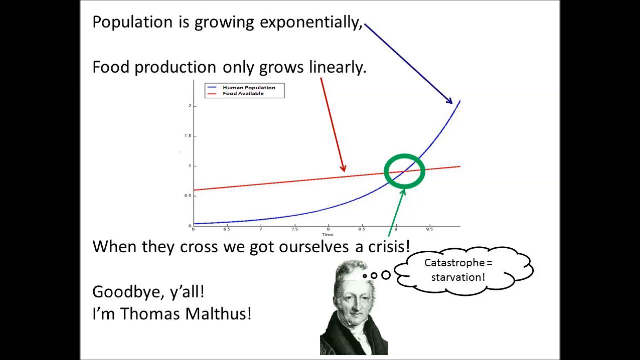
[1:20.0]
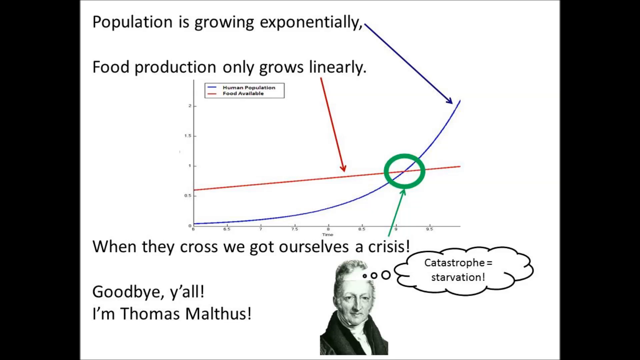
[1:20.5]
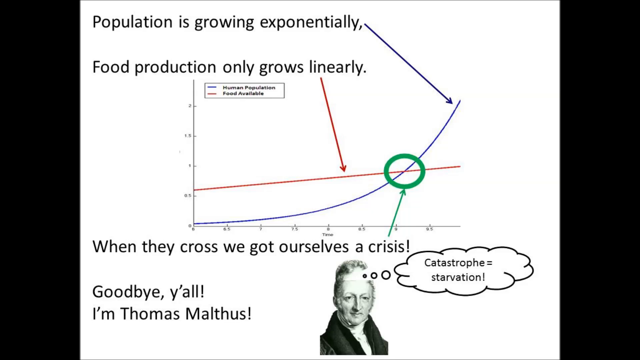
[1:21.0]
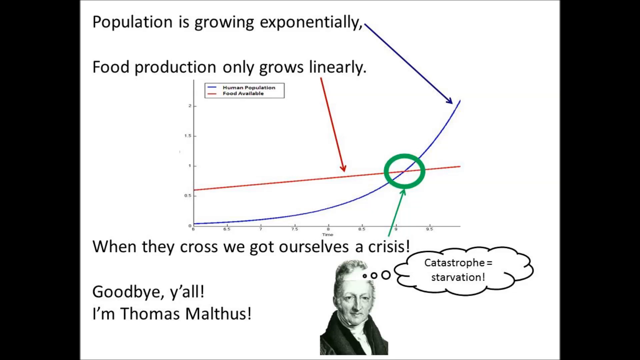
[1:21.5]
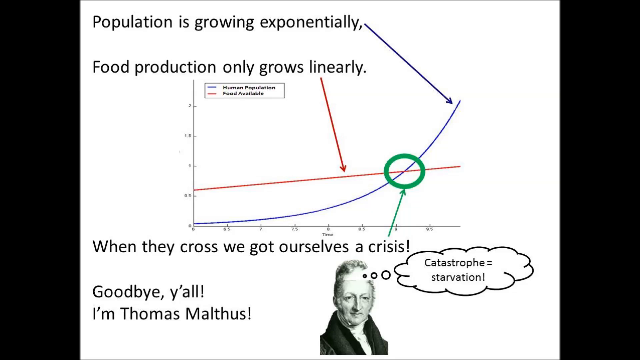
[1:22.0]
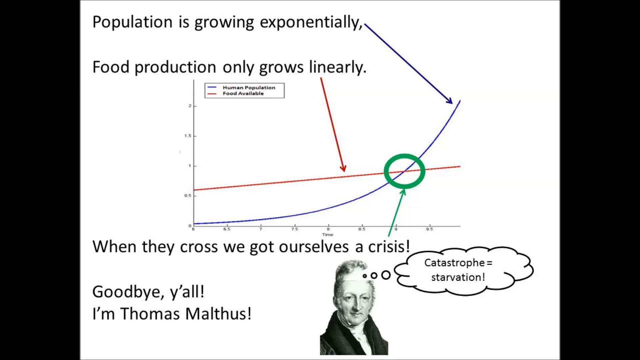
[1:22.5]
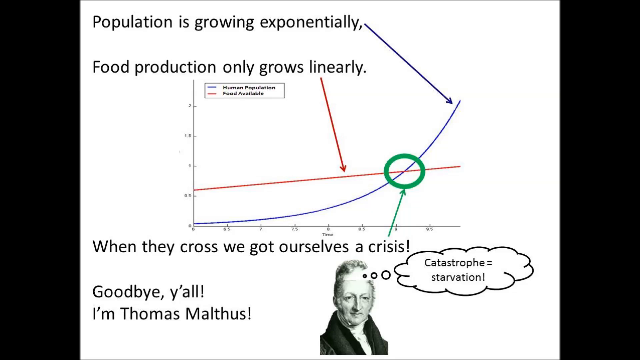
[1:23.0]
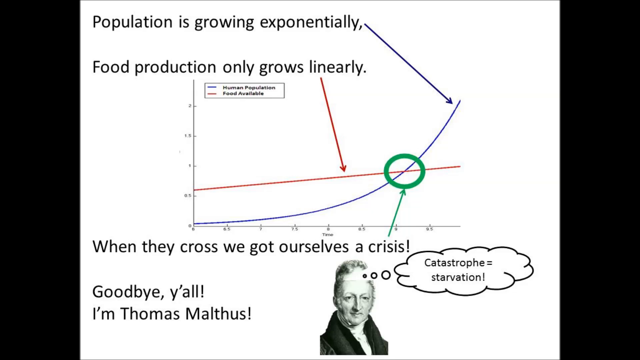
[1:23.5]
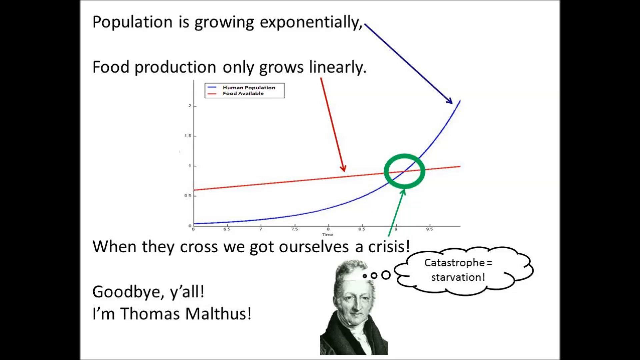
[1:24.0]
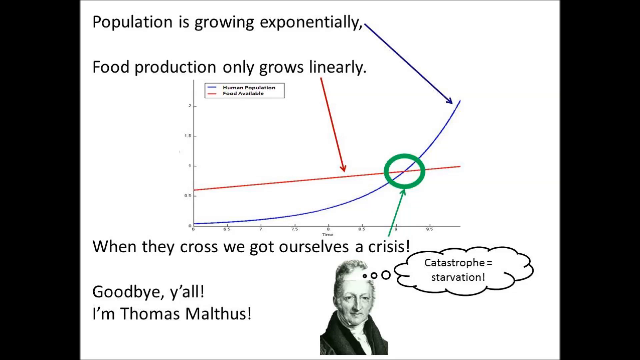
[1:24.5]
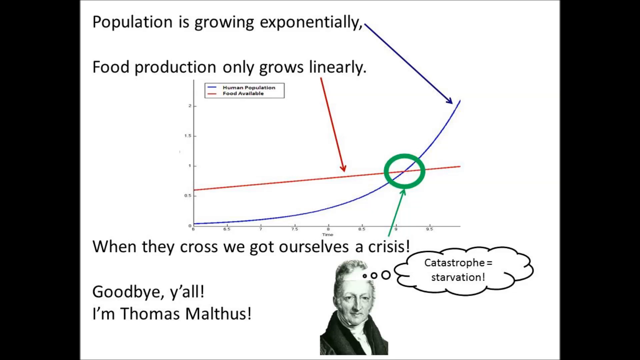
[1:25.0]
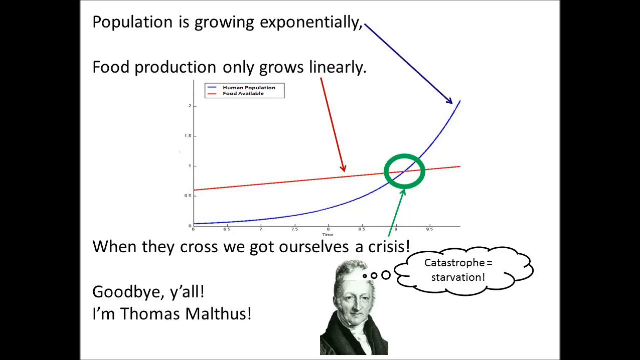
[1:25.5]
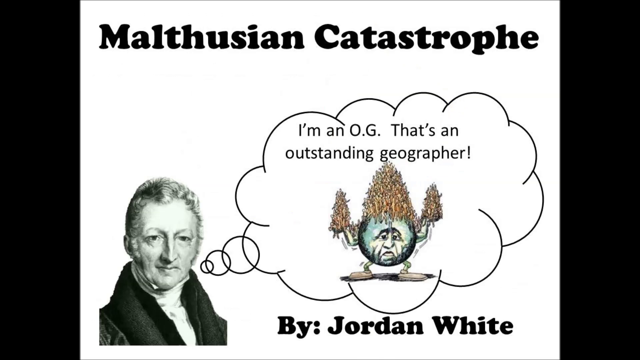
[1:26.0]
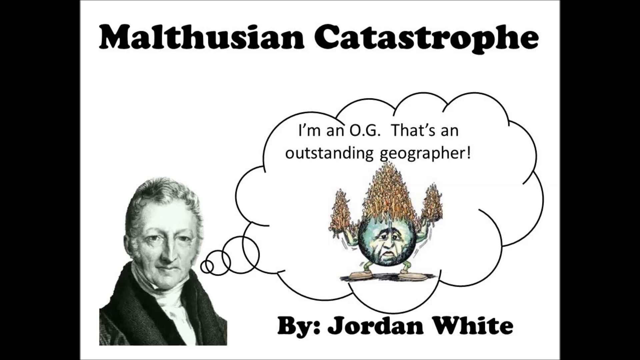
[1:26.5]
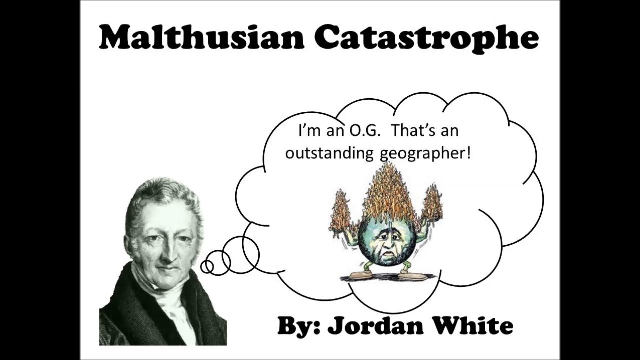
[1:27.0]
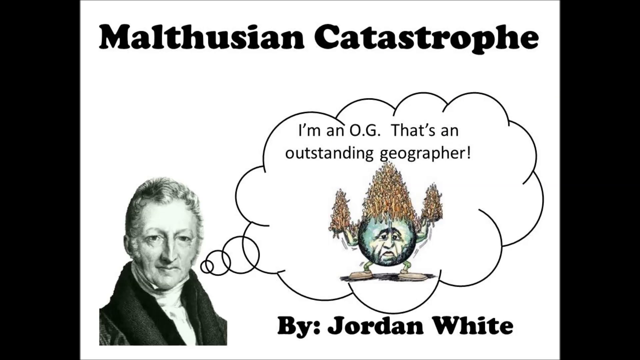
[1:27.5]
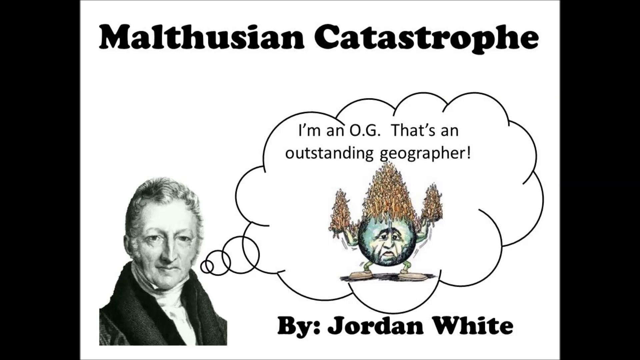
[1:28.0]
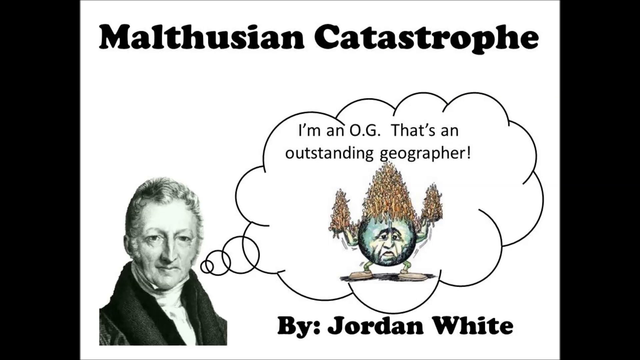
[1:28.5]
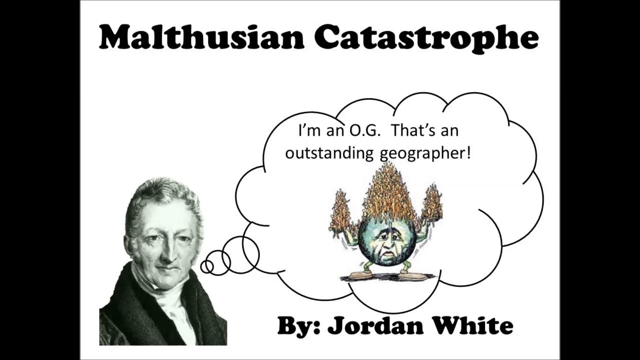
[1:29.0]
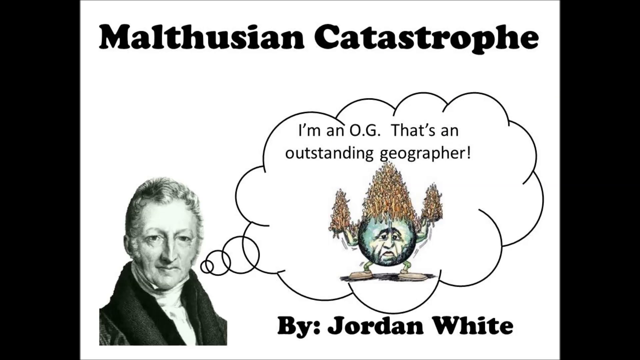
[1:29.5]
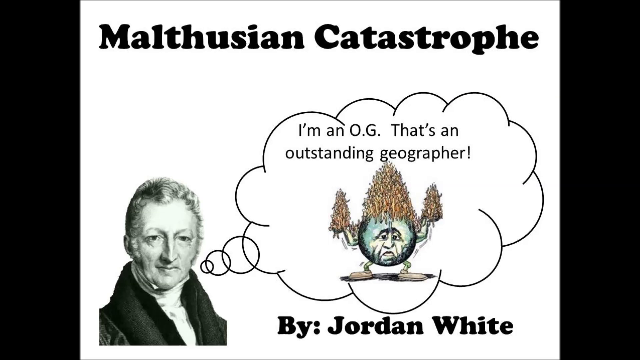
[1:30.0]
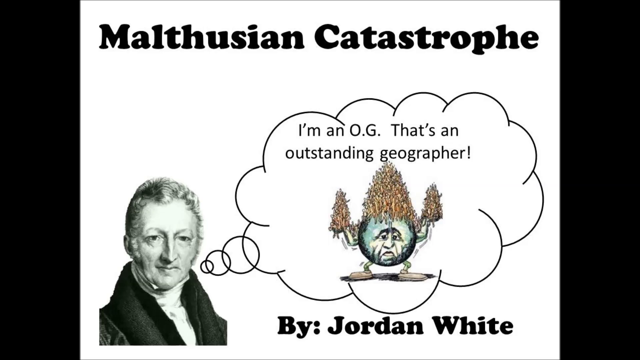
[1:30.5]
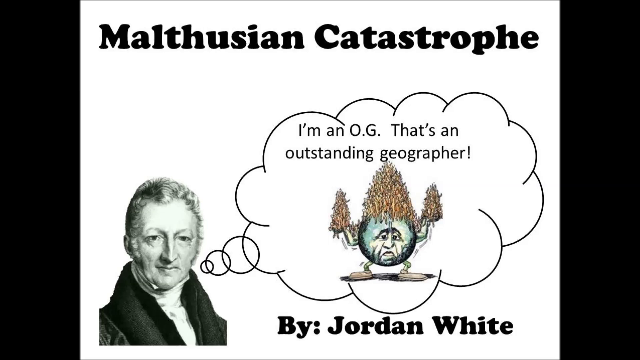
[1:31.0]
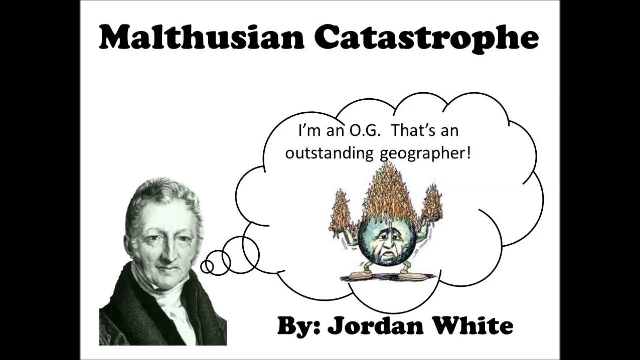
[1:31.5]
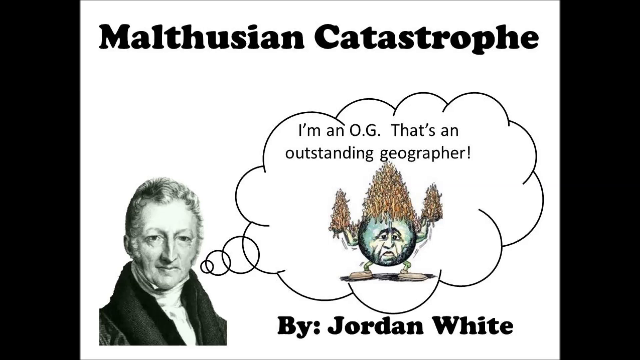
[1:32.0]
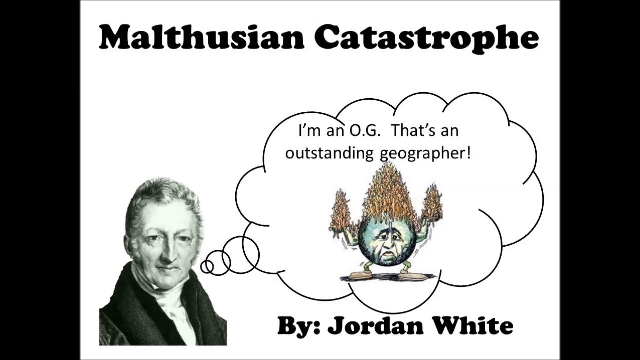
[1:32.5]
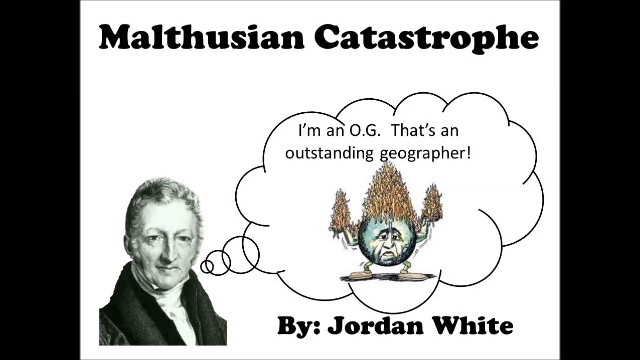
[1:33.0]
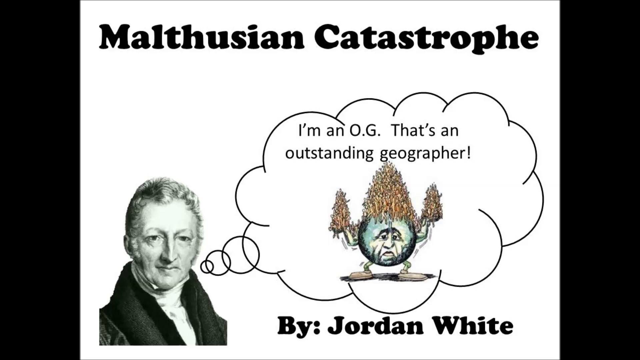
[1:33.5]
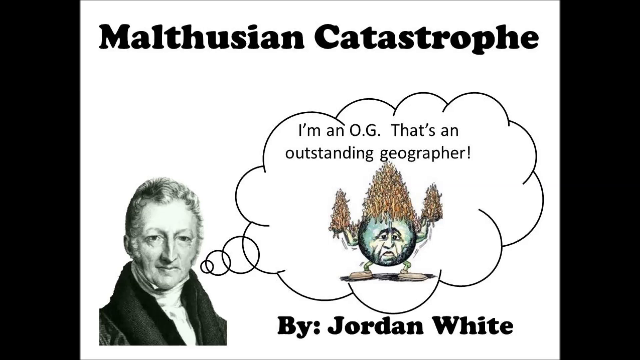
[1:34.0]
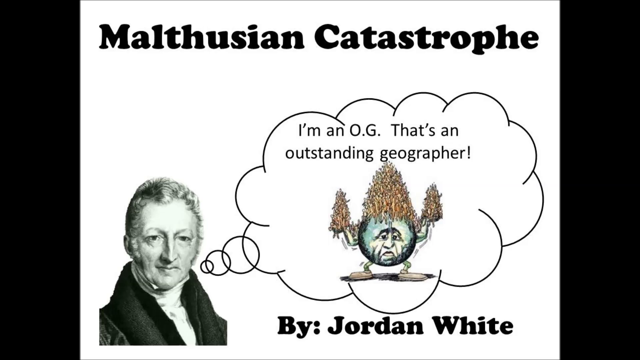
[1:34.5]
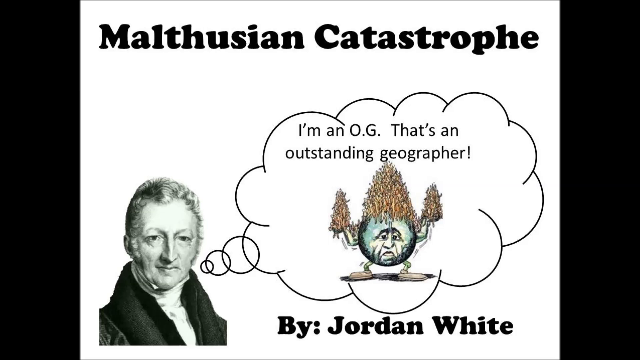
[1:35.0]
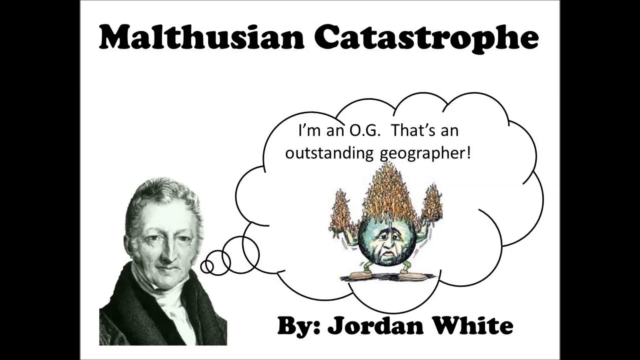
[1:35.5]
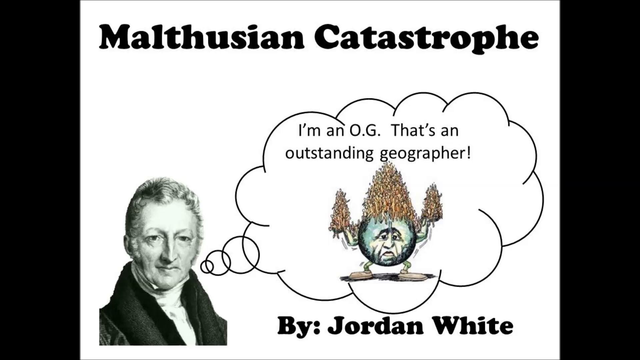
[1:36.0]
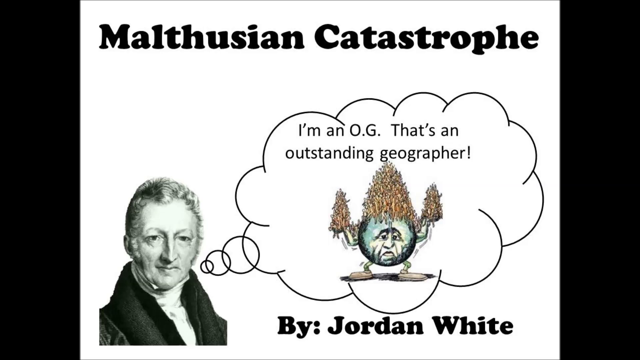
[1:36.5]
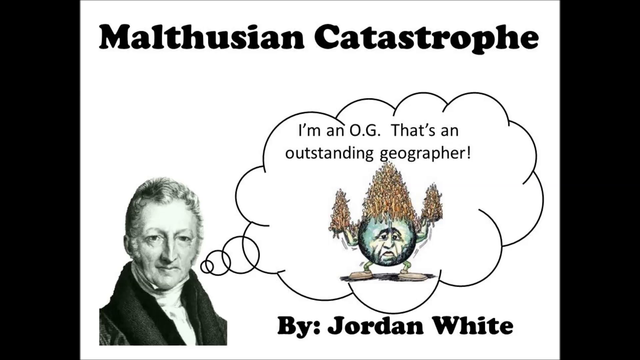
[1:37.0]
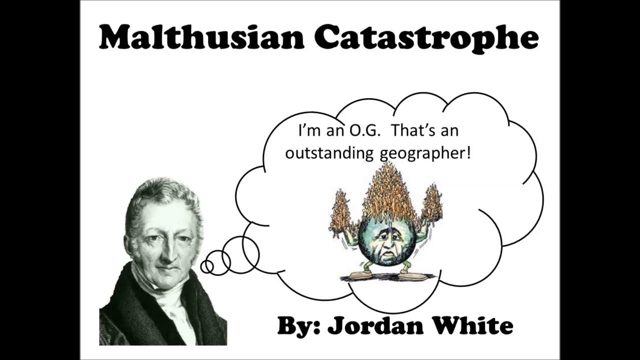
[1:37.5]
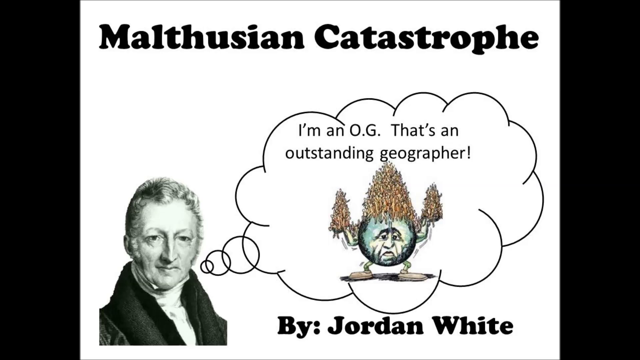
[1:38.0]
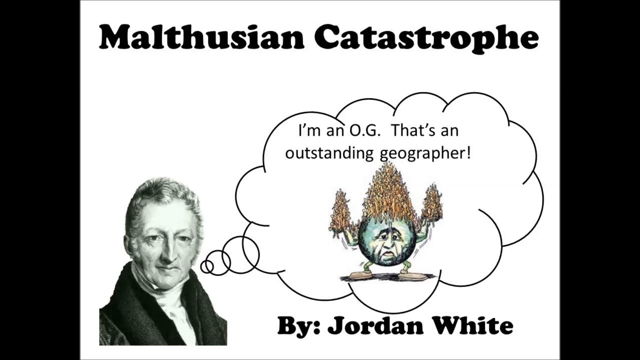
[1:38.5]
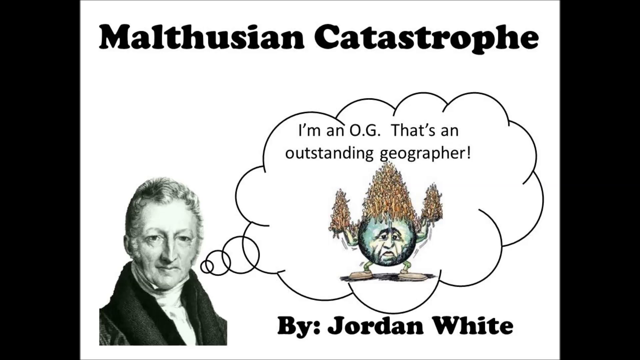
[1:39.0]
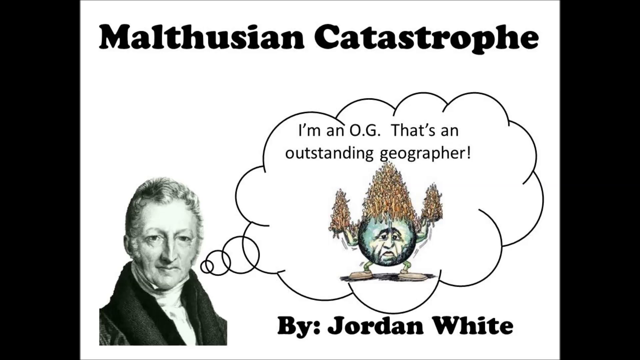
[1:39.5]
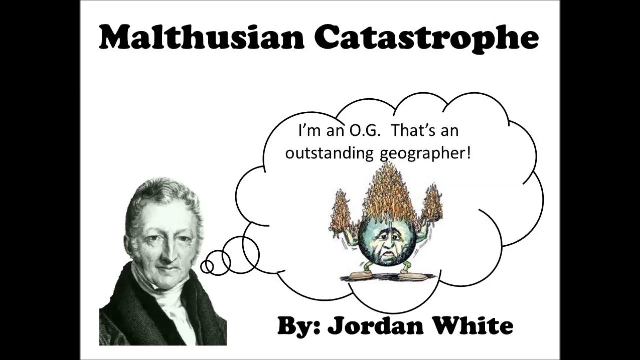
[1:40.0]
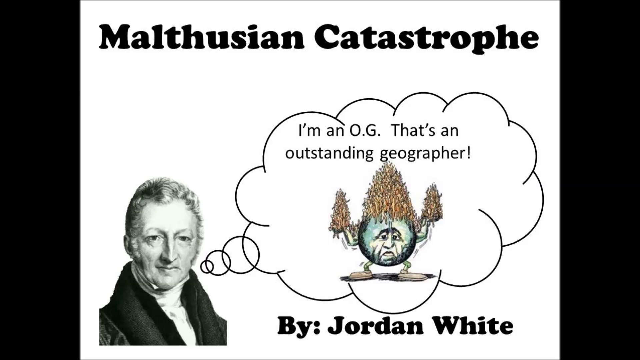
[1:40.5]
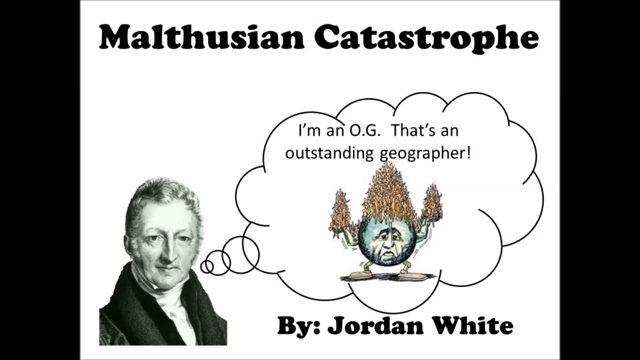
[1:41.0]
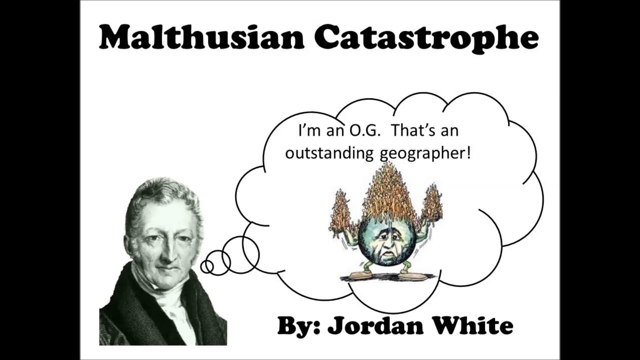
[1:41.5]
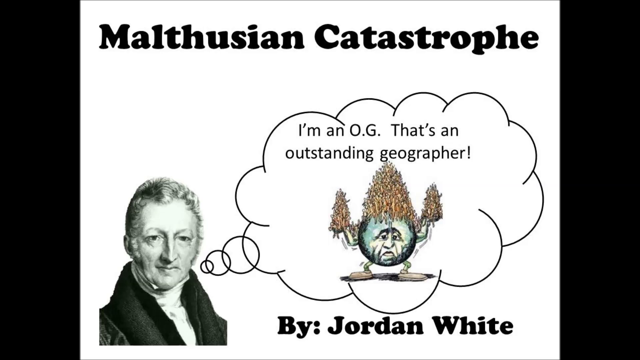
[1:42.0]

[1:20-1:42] At the top of the screen is the text "population is growing exponentially," with "food production only grows linearly" underneath, presented as information from Thomas Malthus. The screen changes to "Malthusian catastrophe" at the top, with an image of Thomas Malthus in the lower left corner. A bubble coming out of his mouth contains the text "I'm an OG, that's an outstanding geographer." Beneath this is a drawing of a round stick figure with stick legs and stick arms, with brown grass growing on its head and brown grass growing out of its arms to form its hands. The words "by Jordan White" are in black in the bottom right corner of the screen. The screen then changes to "Goodbye Y'all" by Thomas Malthus.